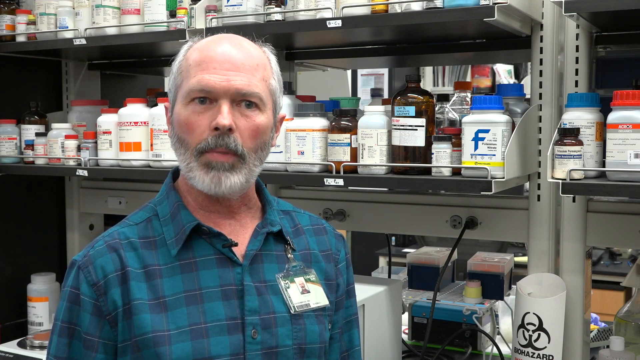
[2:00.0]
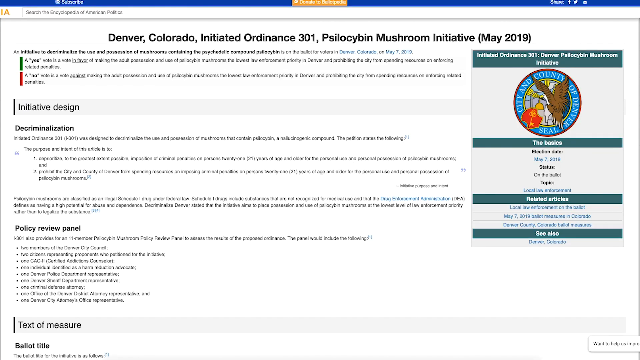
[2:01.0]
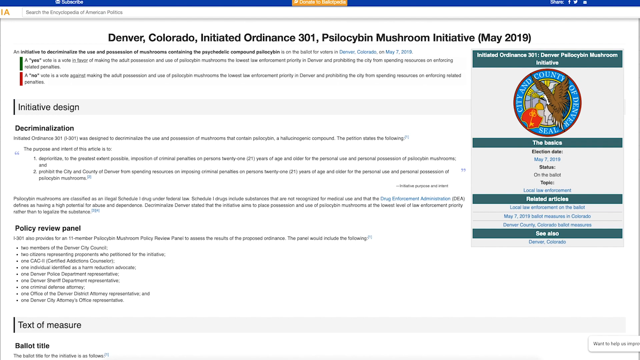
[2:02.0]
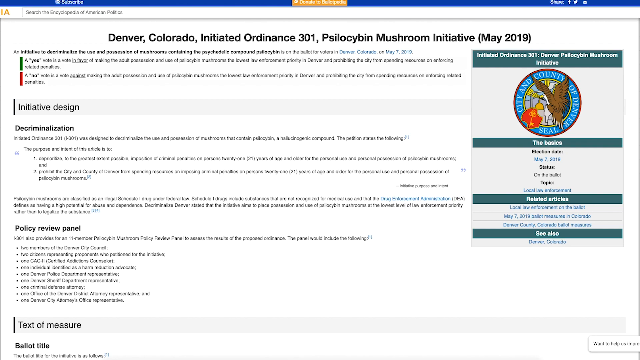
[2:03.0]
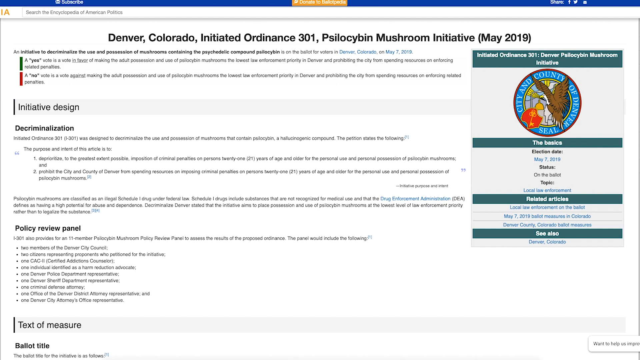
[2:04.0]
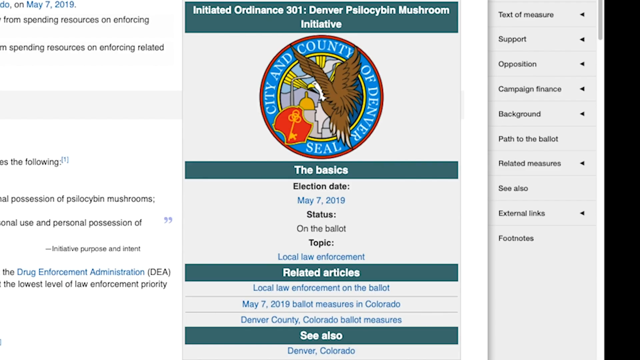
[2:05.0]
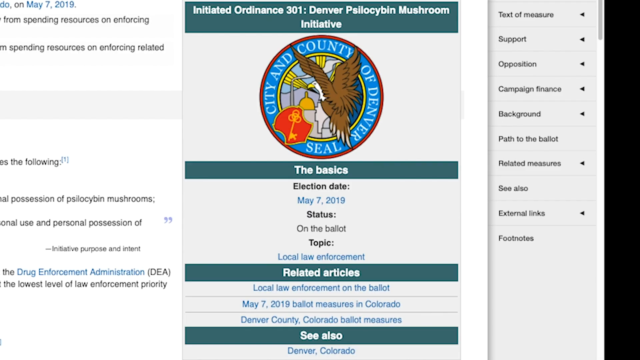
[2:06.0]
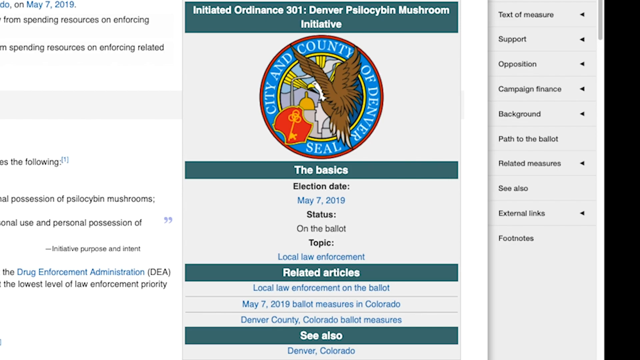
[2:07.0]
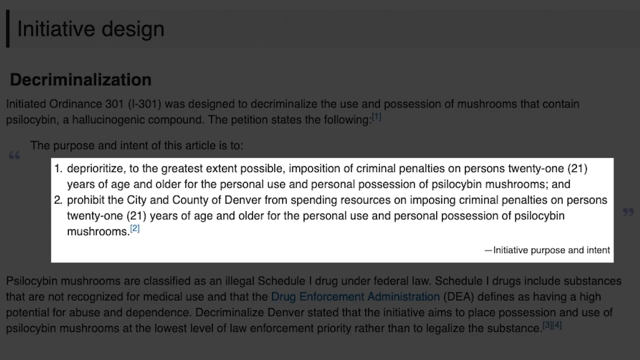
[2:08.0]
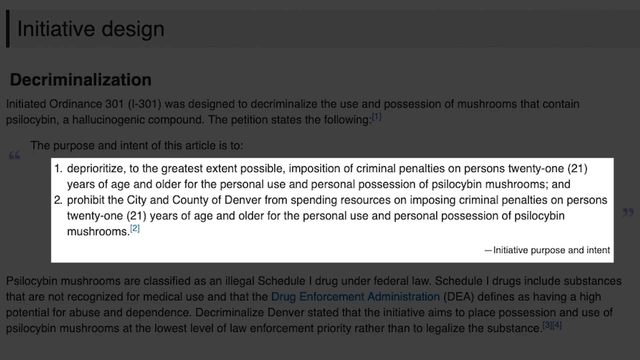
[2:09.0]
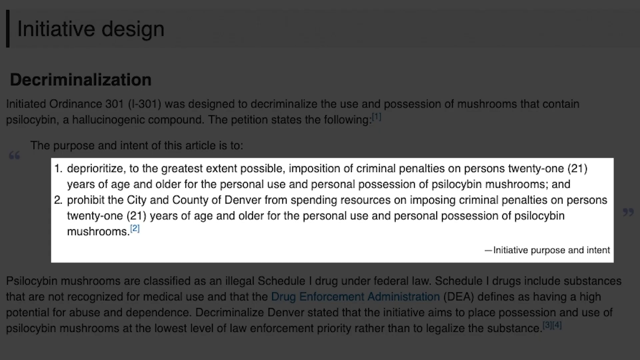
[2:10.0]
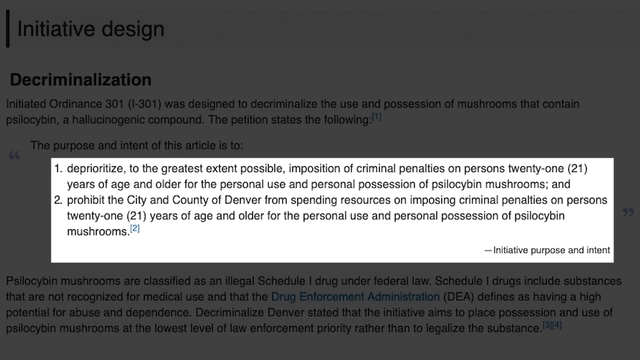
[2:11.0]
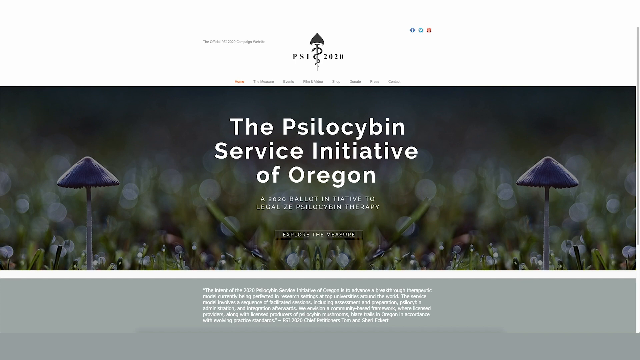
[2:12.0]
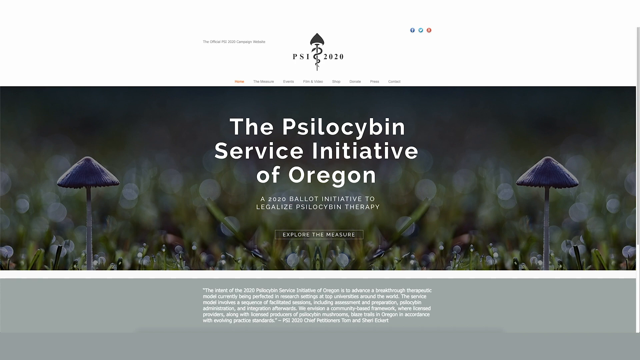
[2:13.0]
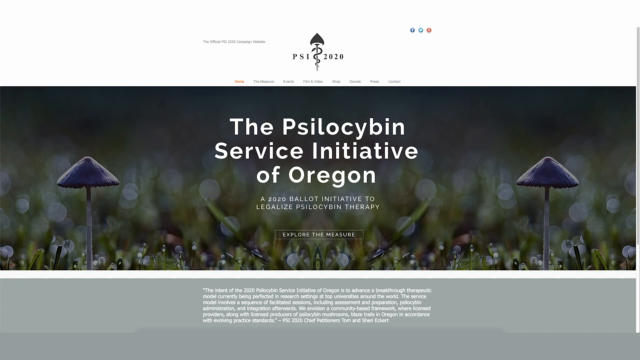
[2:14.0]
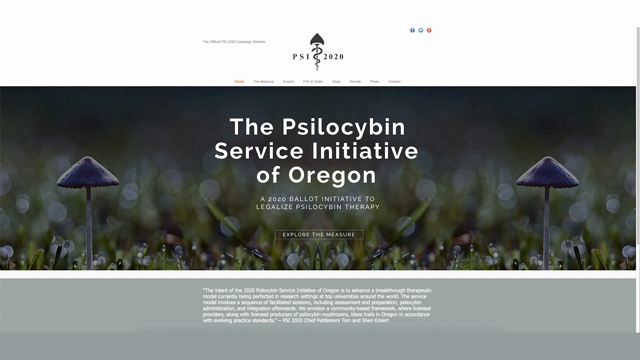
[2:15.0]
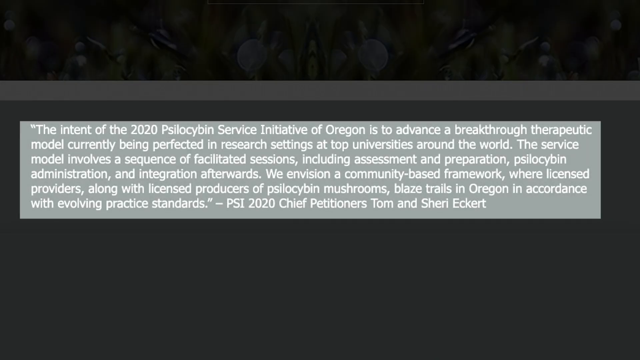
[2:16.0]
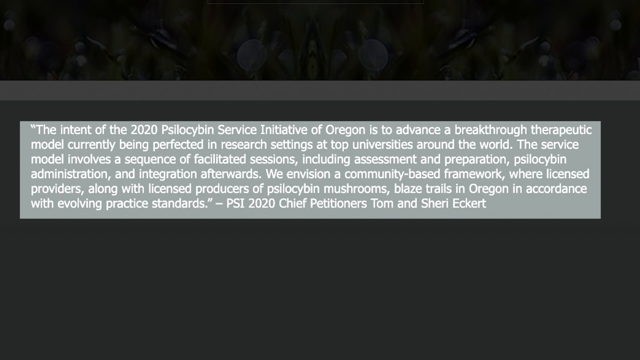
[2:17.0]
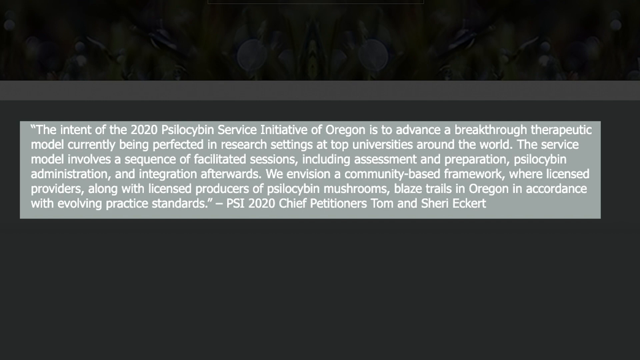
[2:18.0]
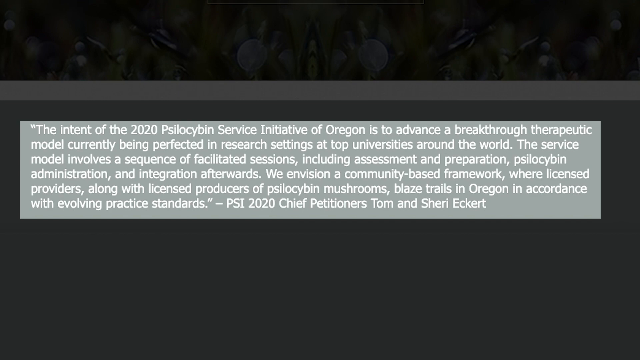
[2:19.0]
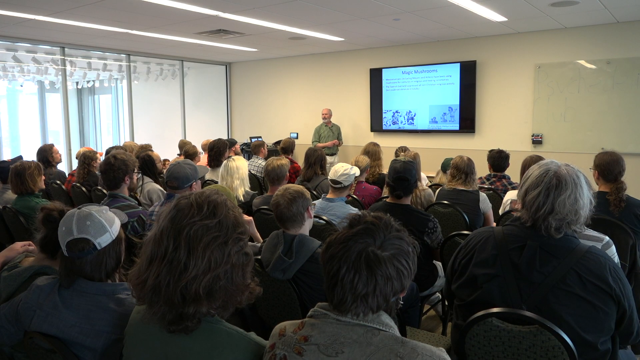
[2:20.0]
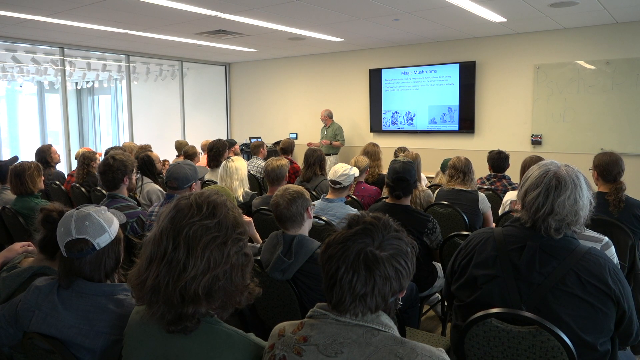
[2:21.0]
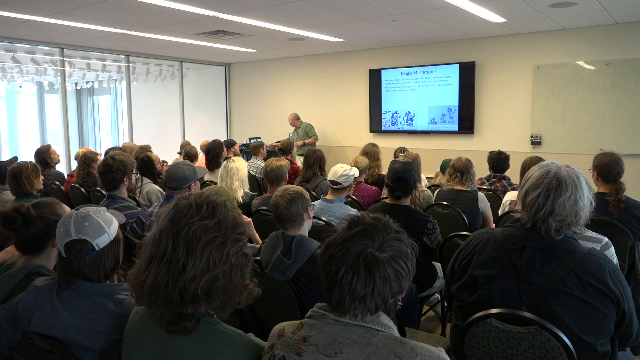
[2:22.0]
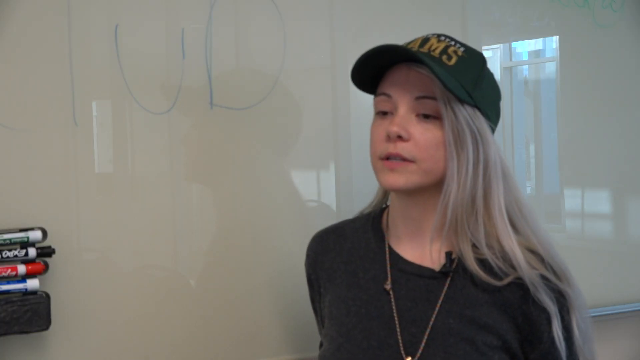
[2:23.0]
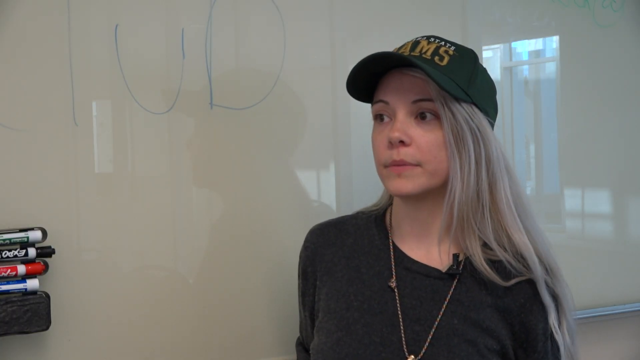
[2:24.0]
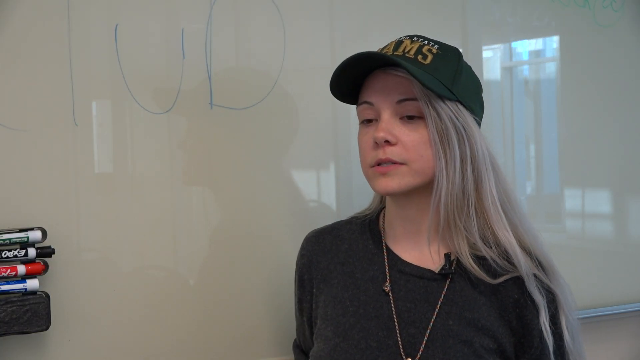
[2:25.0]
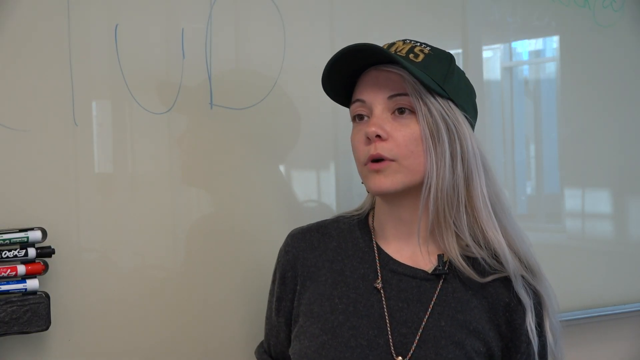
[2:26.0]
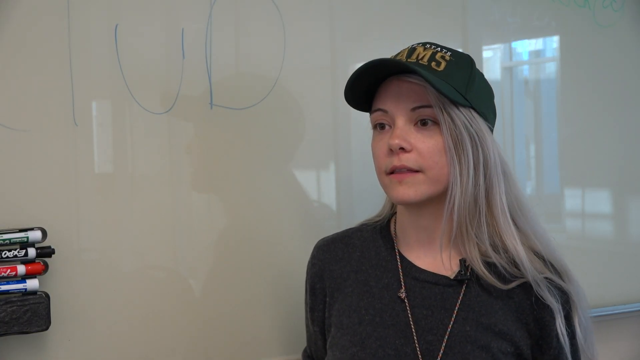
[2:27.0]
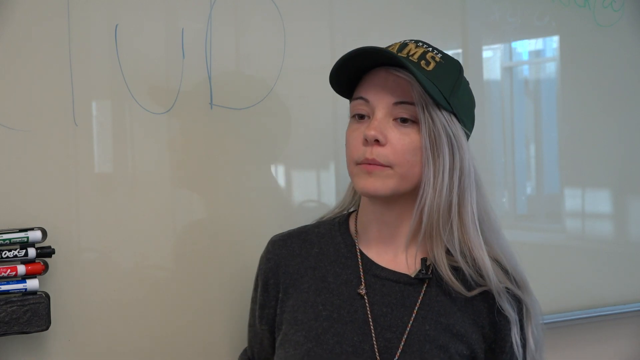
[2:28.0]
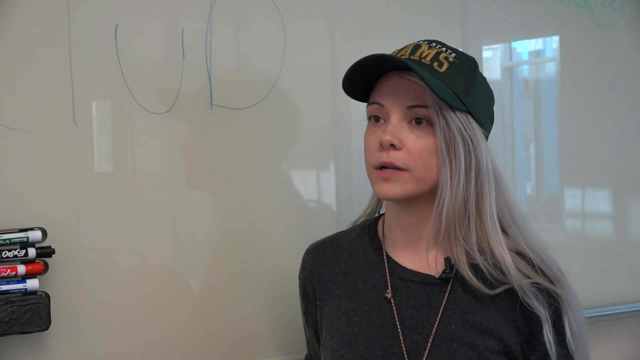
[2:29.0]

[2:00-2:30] Dr. Ken Kassenbrock is seen in what appears to be his lab. A screen then reads "Denver, Colorado, Initiated Ordinance 301", a psilocybin mushroom initiative whose design appears to be to decriminalize the use and possession of mushrooms containing psilocybin, a hallucinogenic compound. The text includes "For more information, visit www.FEMA.gov", the date Ordinance 301 was initiated, the reasons for it, and "persons 21 years of age and older". A website for Oregon follows, reading "the Psilocybin Service Initiative of Oregon", an initiative to legalize this kind of therapy. The video then returns to the classroom and to a student who was speaking.